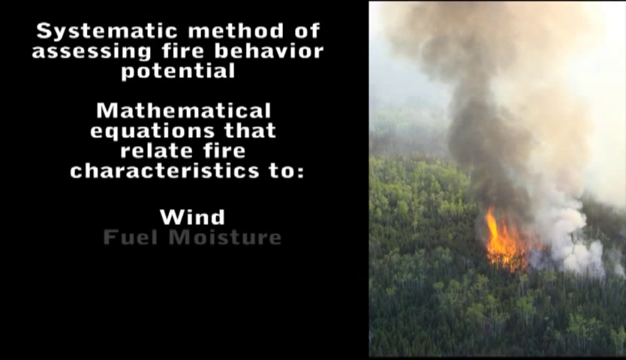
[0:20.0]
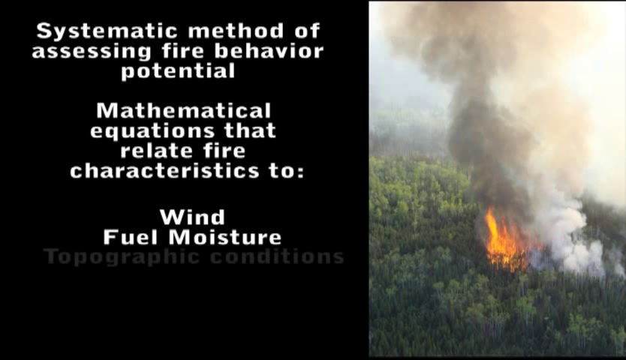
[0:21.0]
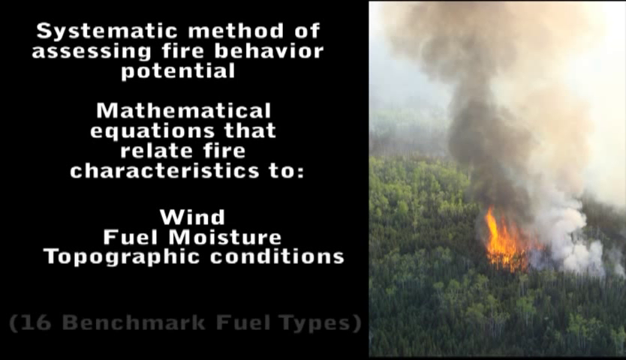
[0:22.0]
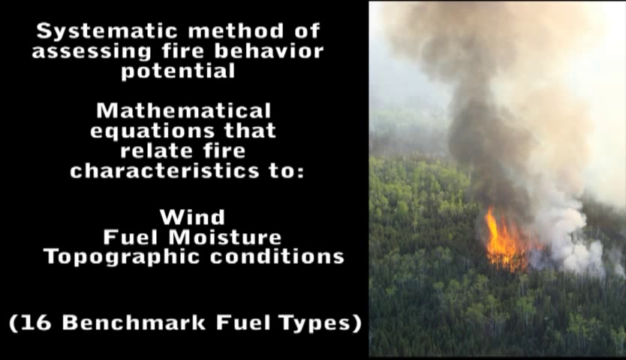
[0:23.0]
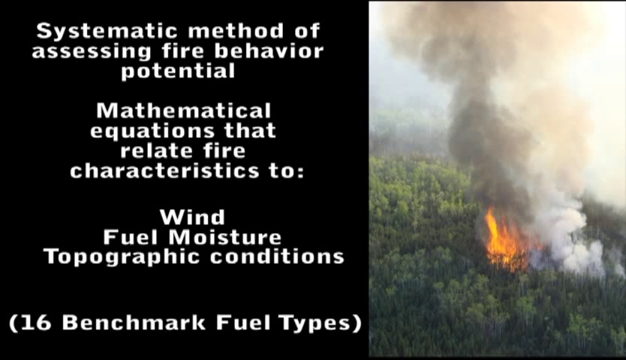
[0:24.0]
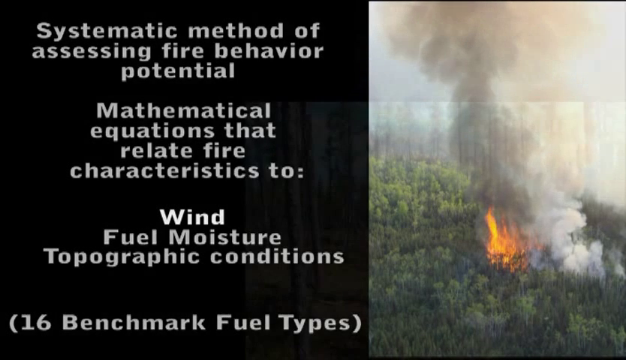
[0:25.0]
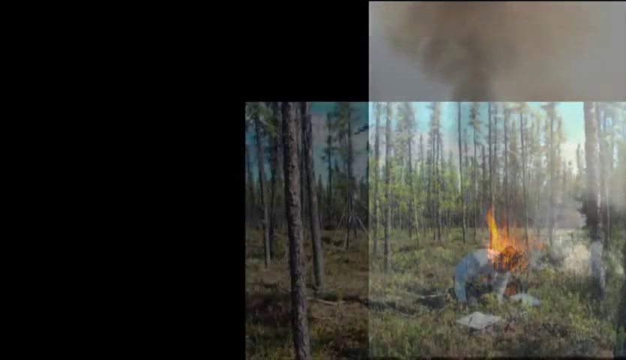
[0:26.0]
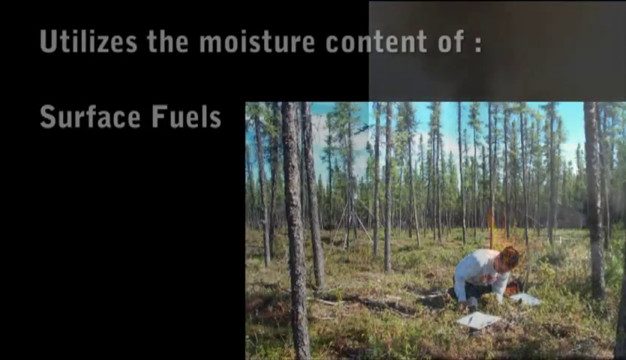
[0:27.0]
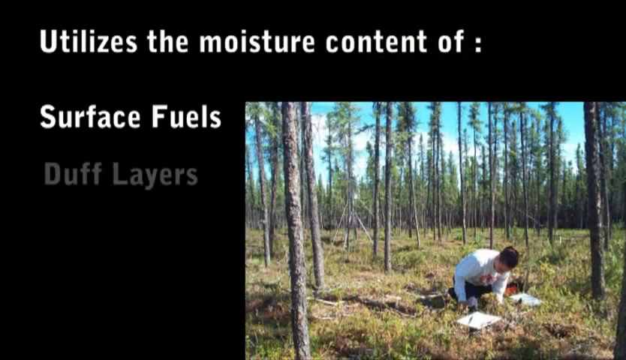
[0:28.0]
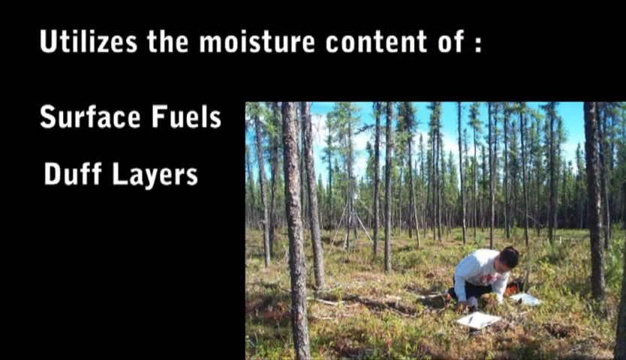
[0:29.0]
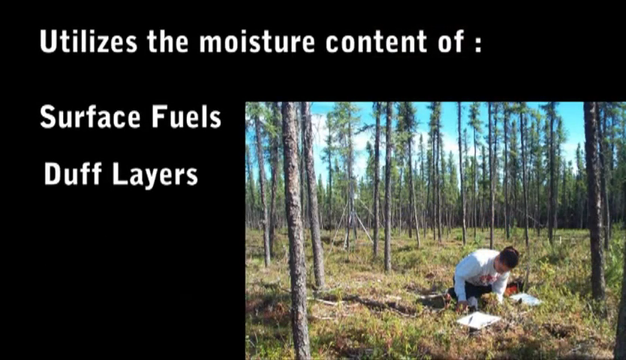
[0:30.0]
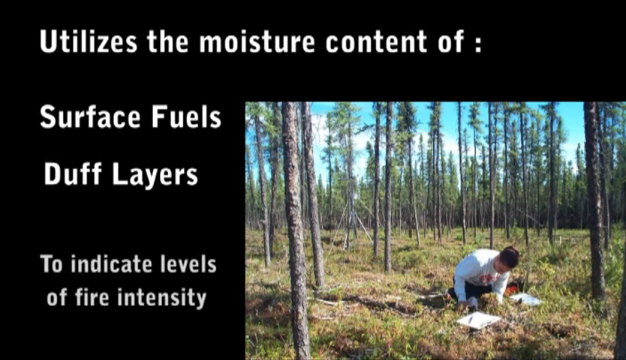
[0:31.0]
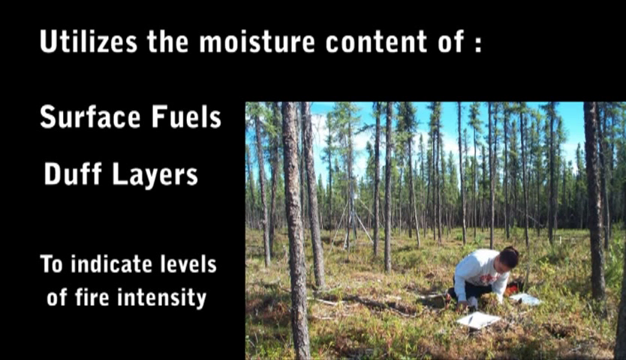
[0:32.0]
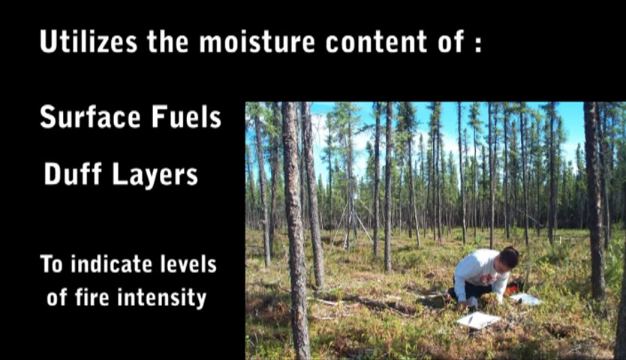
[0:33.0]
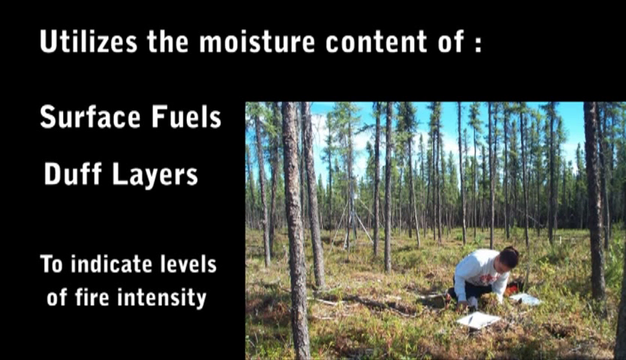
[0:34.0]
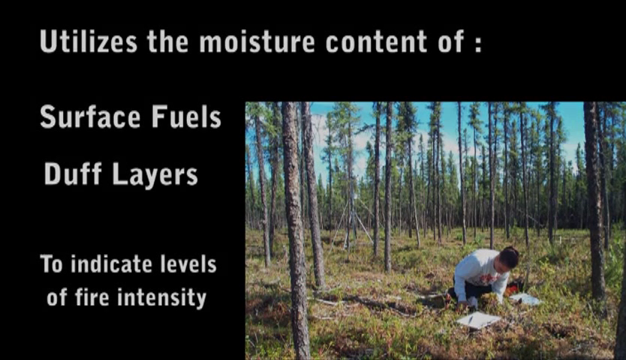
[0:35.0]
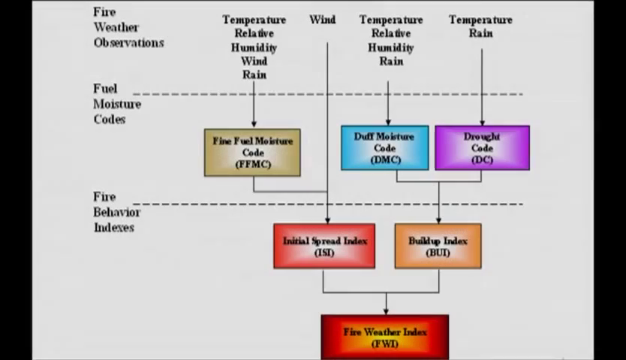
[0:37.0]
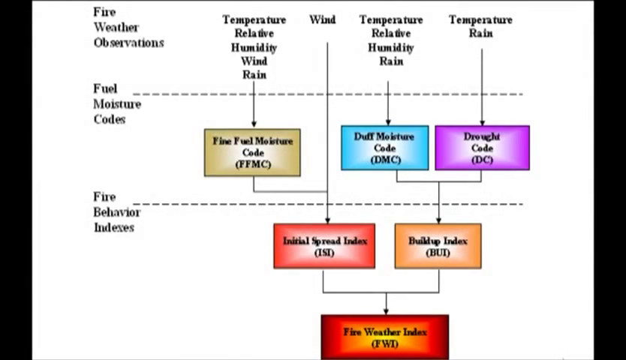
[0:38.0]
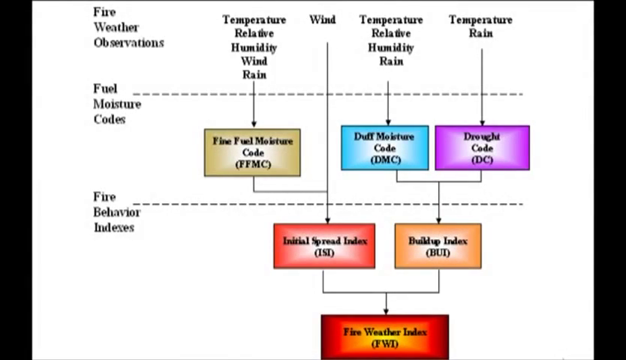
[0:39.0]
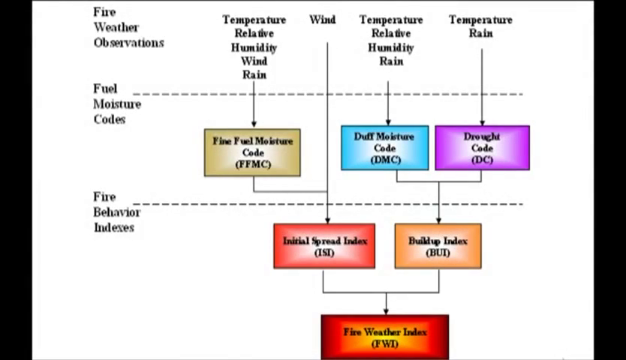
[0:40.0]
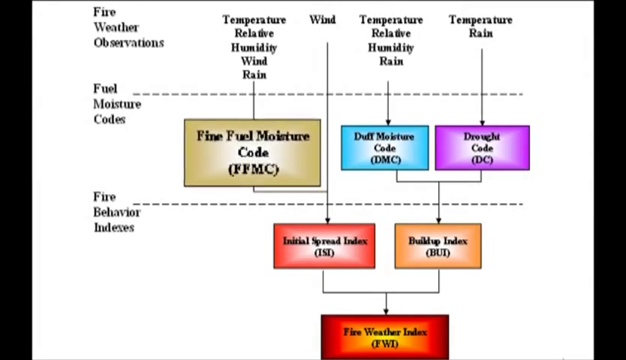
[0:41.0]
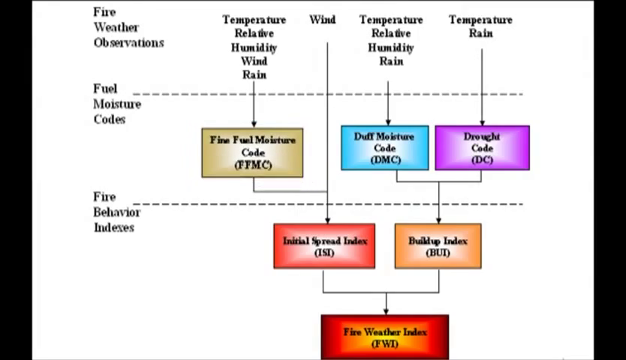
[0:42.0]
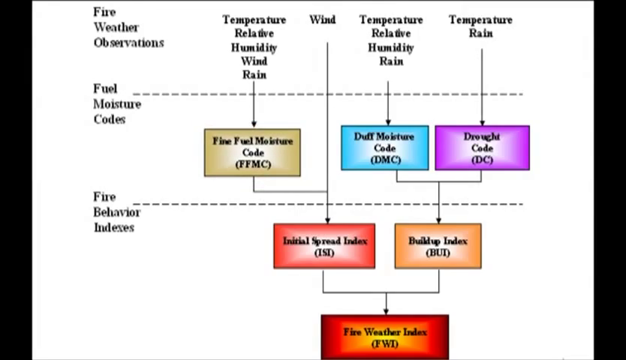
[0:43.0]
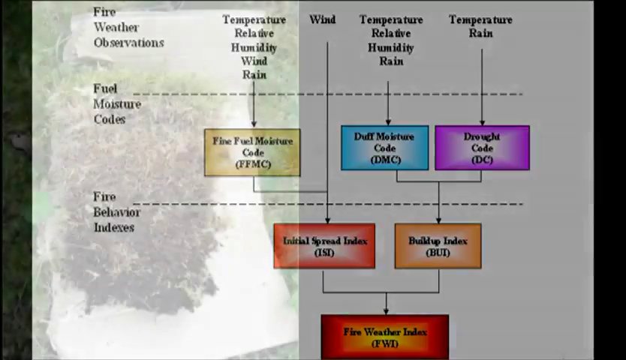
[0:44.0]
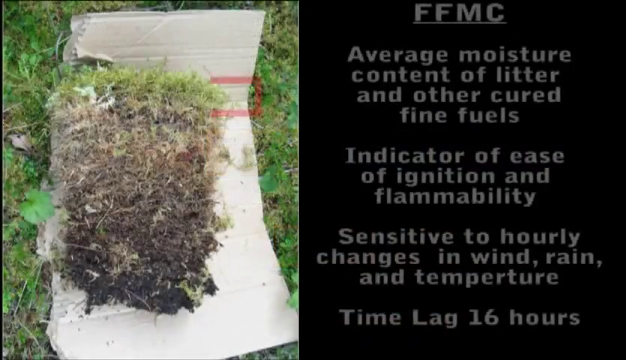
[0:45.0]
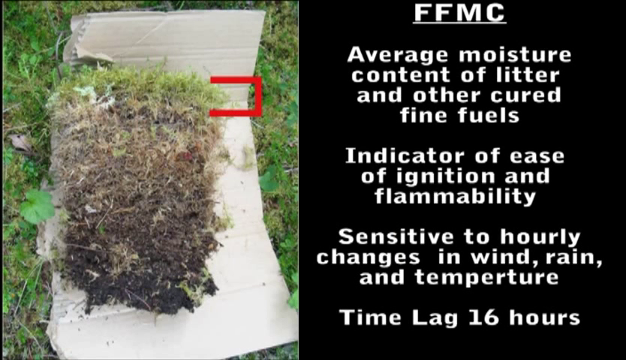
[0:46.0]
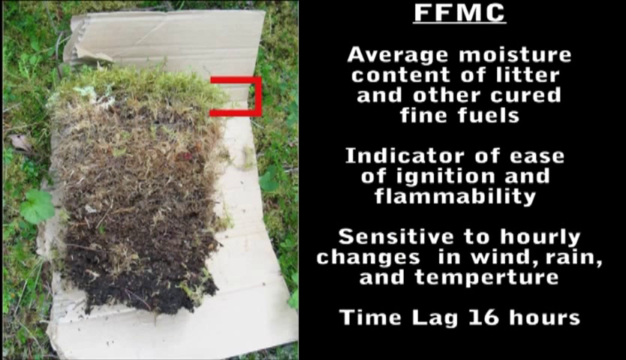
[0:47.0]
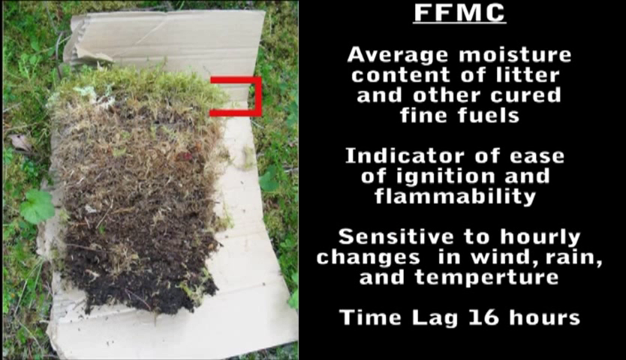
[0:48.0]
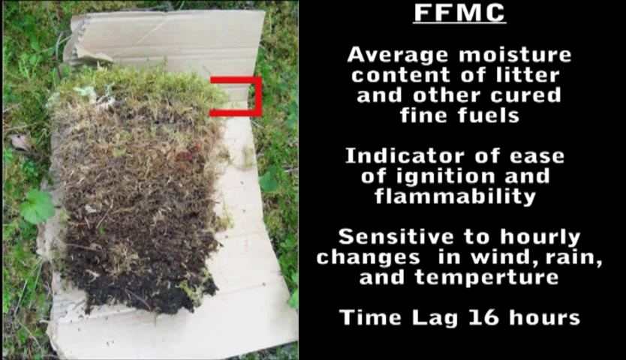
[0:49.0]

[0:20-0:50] The screen is split. On the left, white letters on a black background read "Systematic method of assessing fire behavior potential," and beneath it "mathematical equations that relate fire characteristics to," followed by "wind" and "fuel moisture." On the right is an aerial helicopter view of a forest in Canada that is on fire, with a tremendous amount of smoke rising up and the fire visible underneath the smoke. More words are then added on the left: after "wind" and "fuel moisture" comes "topographical conditions," and underneath it, in parentheses, "16 benchmark fuel types."